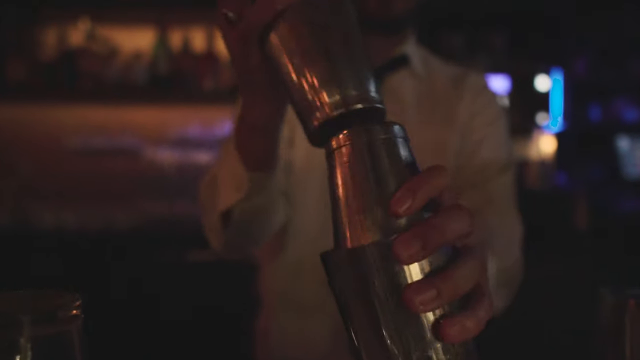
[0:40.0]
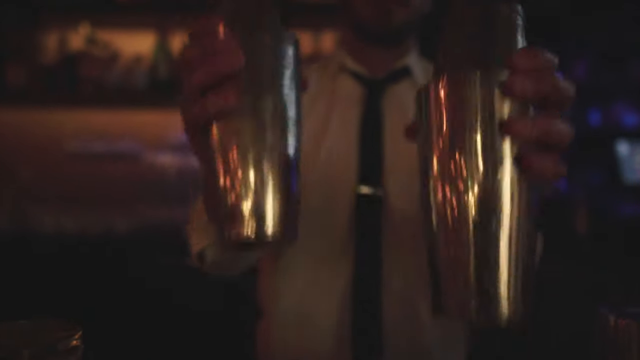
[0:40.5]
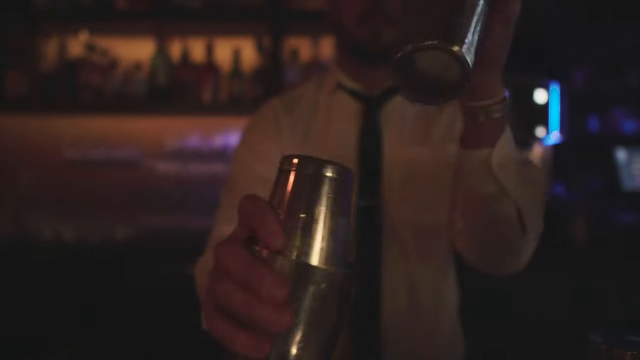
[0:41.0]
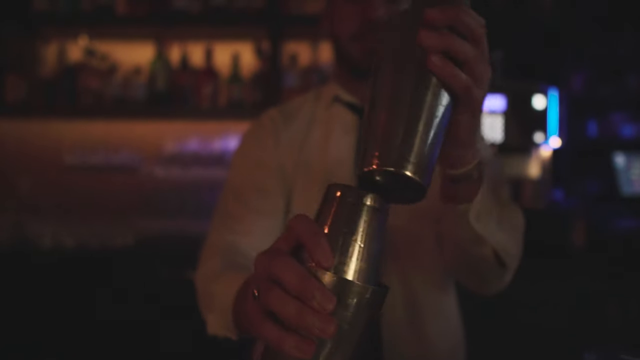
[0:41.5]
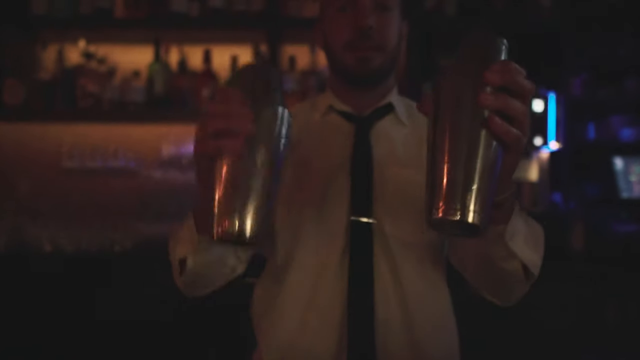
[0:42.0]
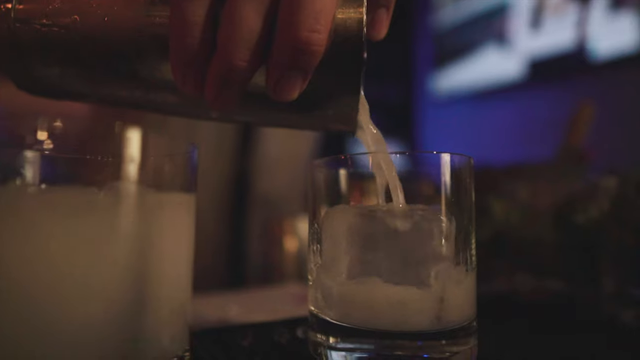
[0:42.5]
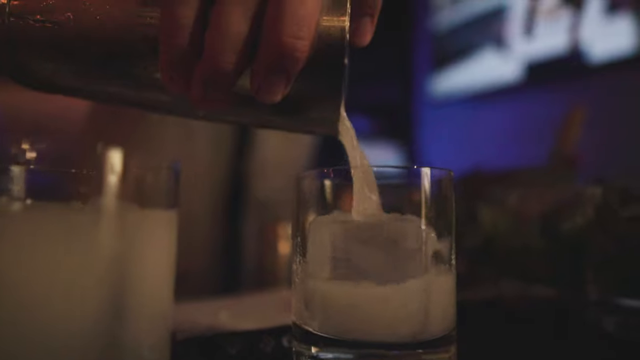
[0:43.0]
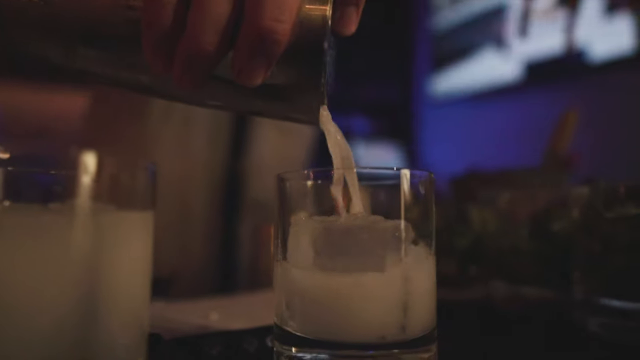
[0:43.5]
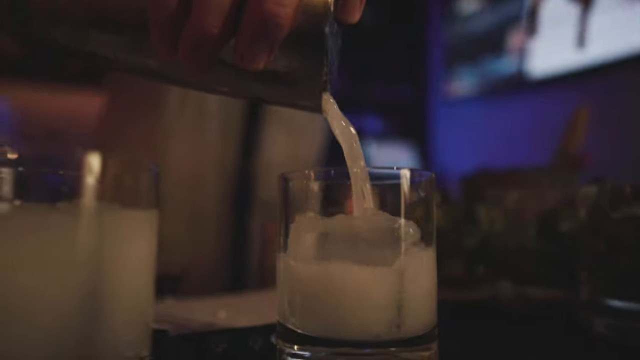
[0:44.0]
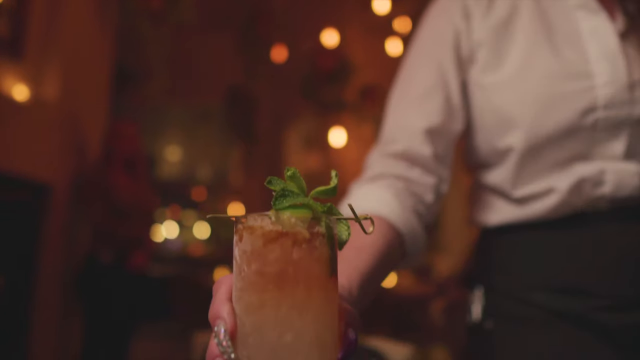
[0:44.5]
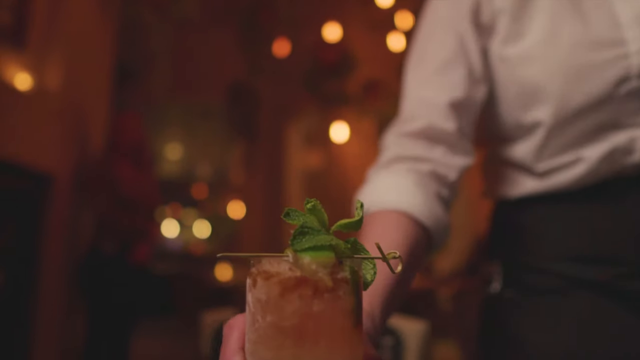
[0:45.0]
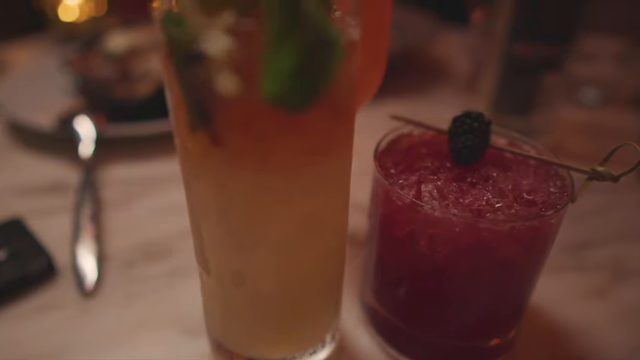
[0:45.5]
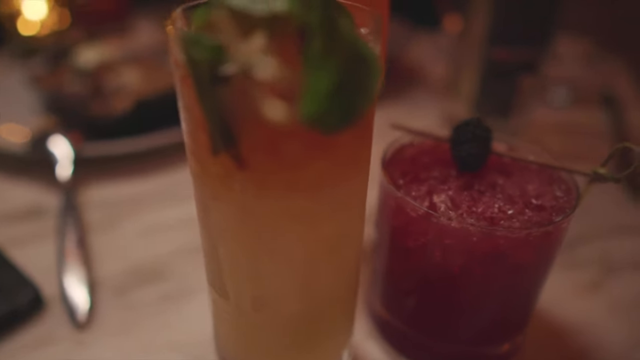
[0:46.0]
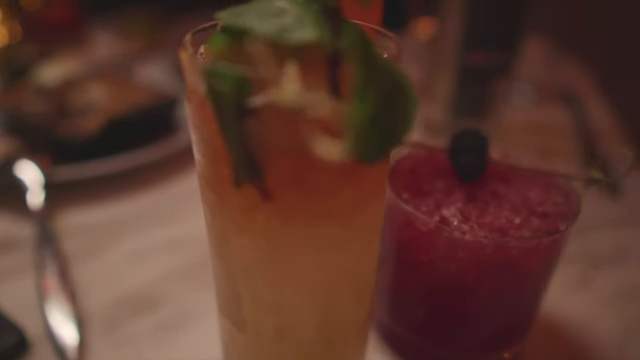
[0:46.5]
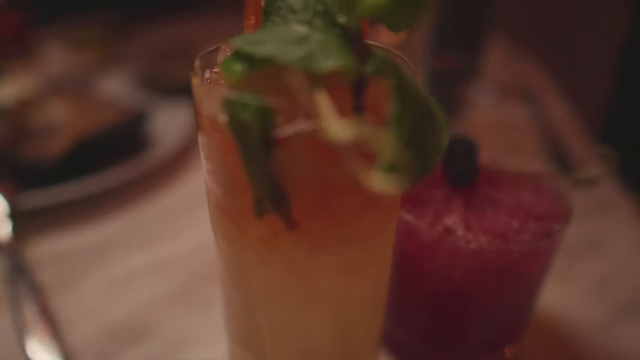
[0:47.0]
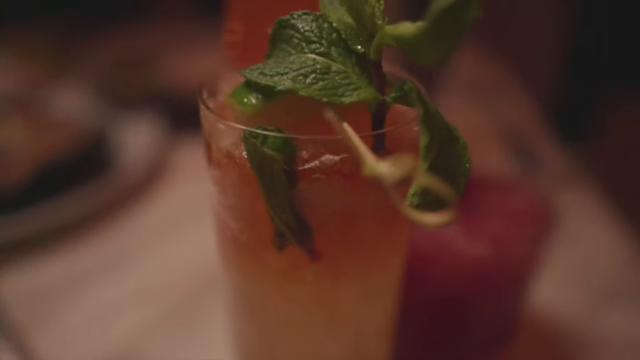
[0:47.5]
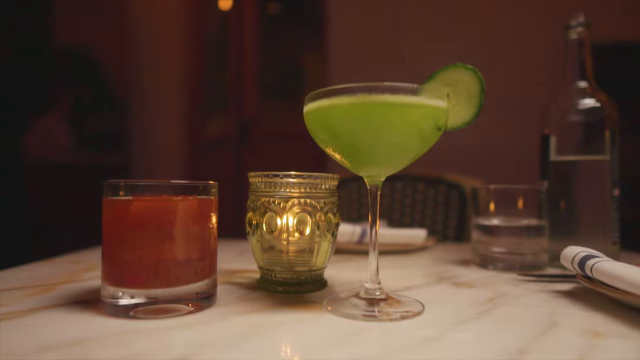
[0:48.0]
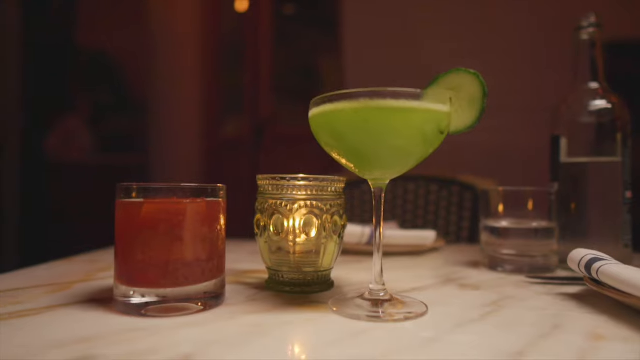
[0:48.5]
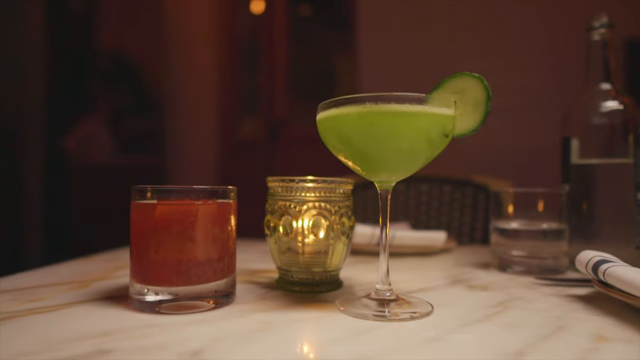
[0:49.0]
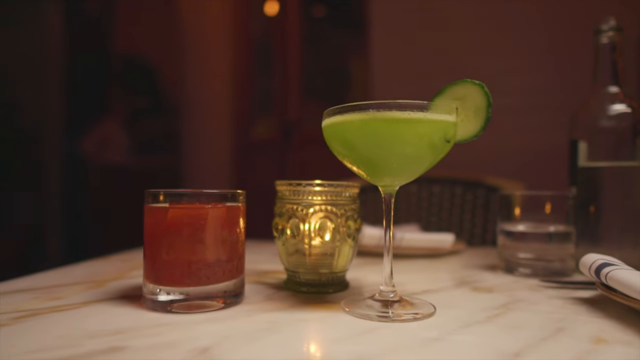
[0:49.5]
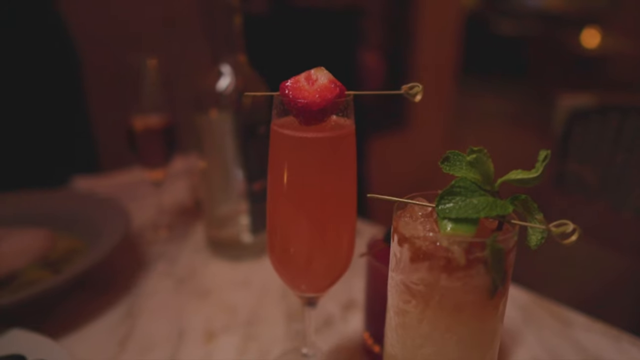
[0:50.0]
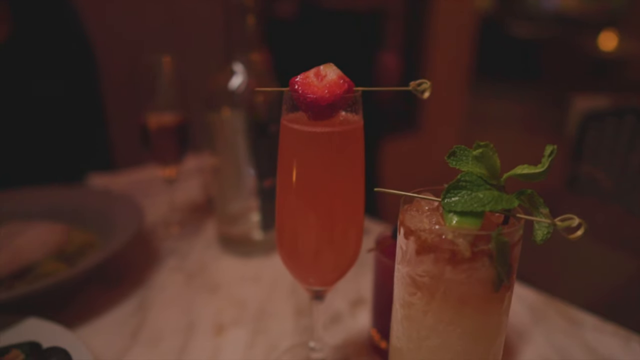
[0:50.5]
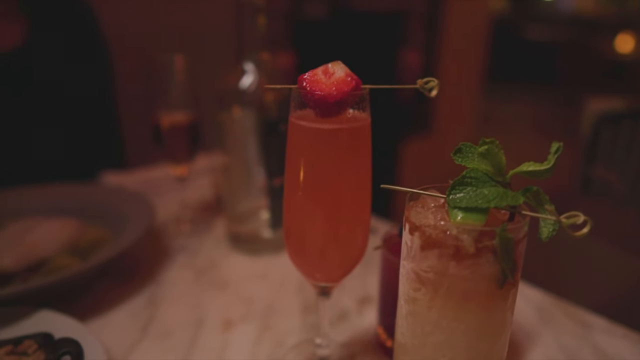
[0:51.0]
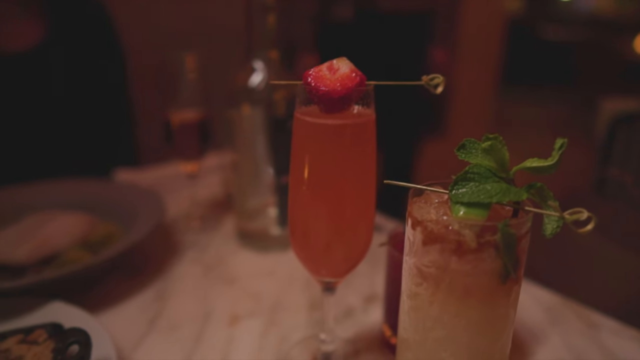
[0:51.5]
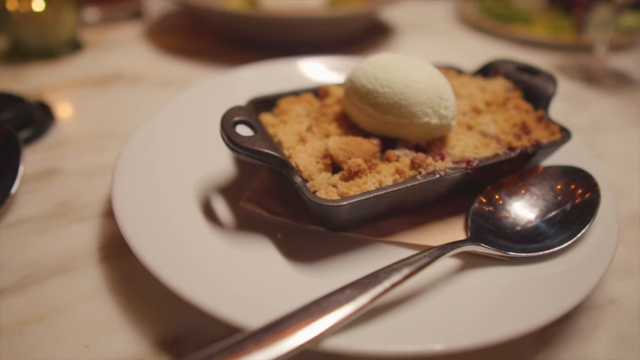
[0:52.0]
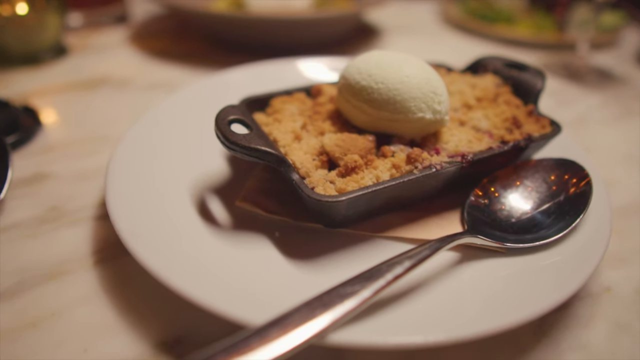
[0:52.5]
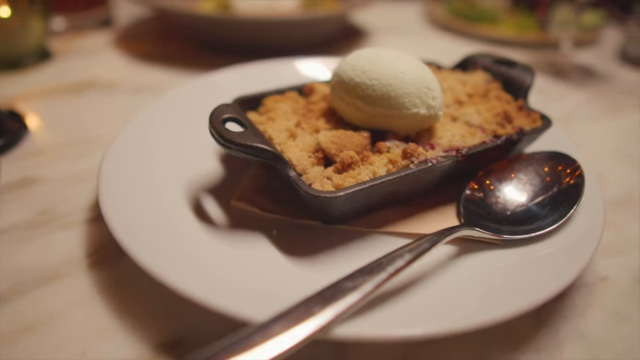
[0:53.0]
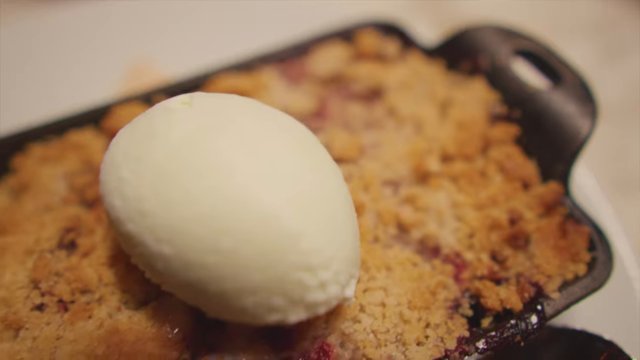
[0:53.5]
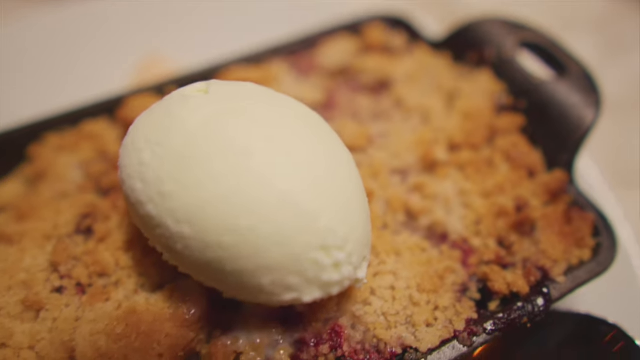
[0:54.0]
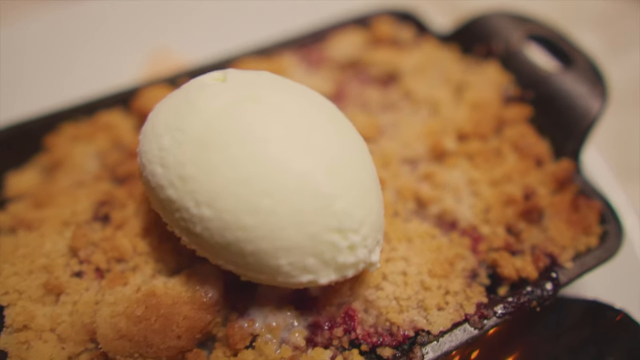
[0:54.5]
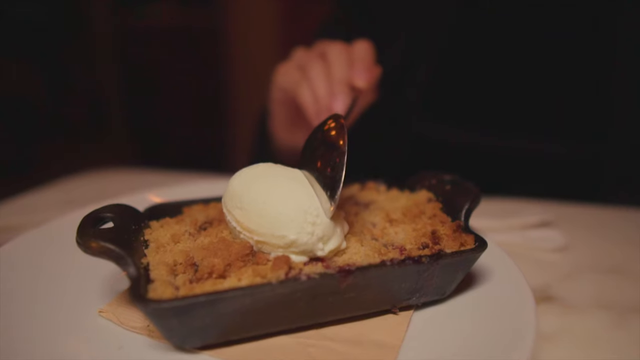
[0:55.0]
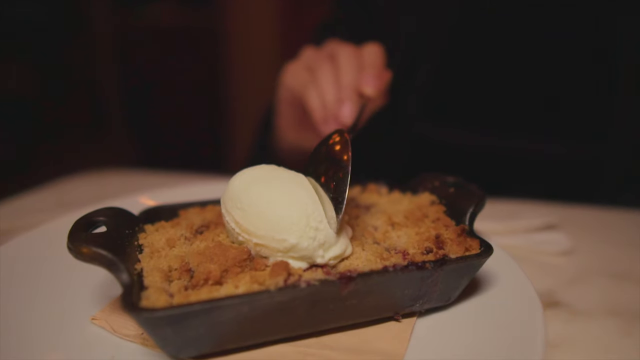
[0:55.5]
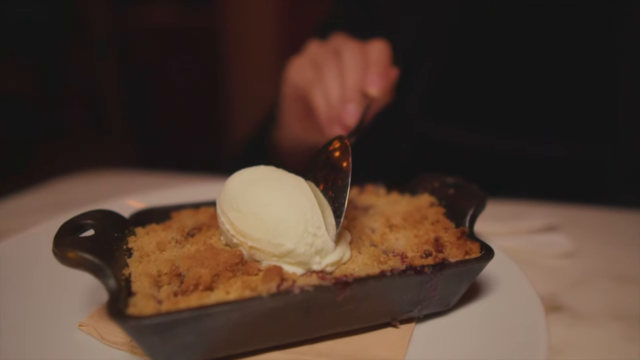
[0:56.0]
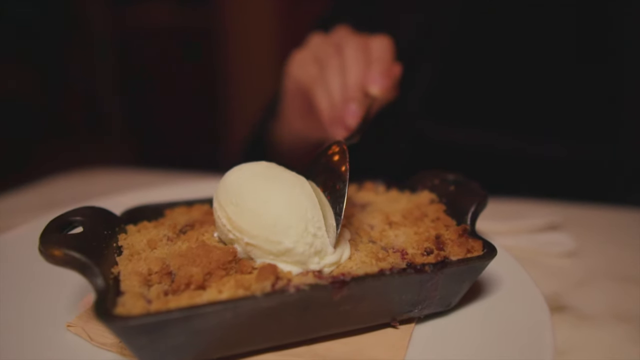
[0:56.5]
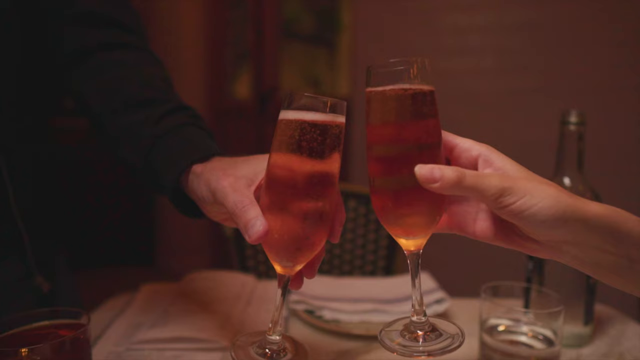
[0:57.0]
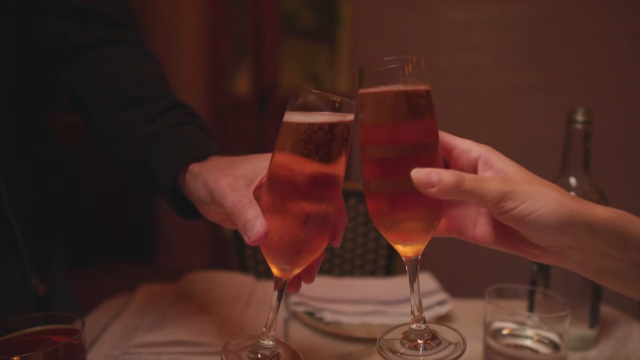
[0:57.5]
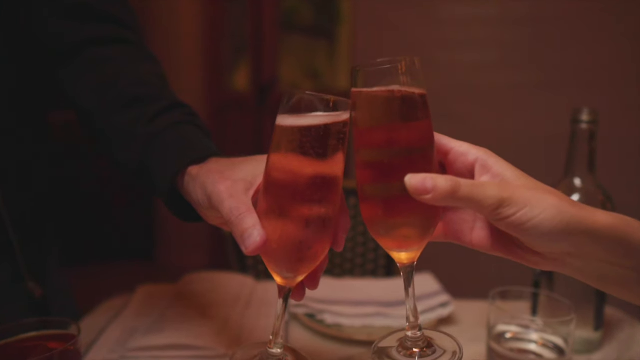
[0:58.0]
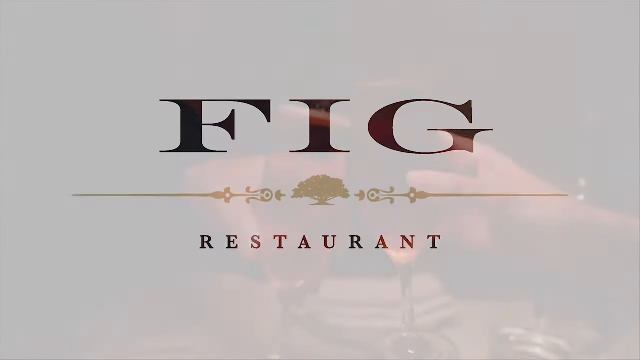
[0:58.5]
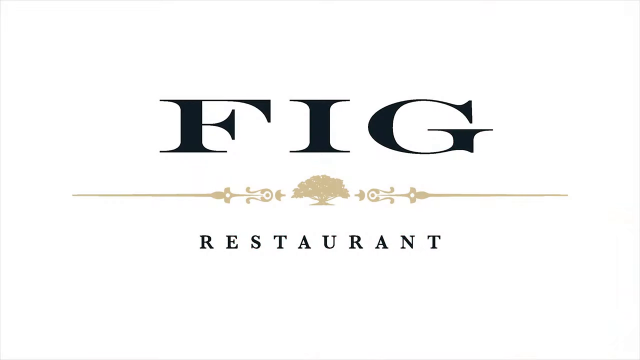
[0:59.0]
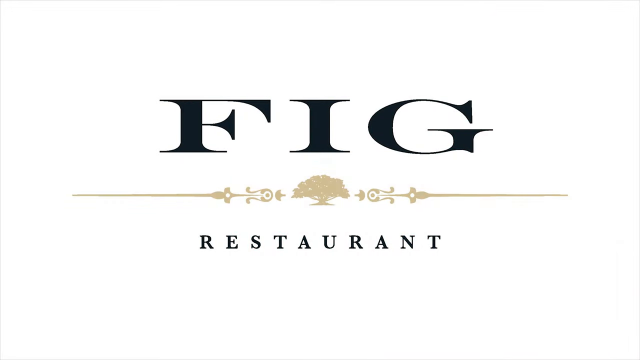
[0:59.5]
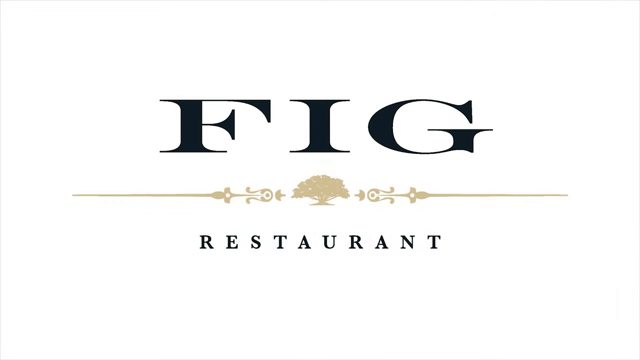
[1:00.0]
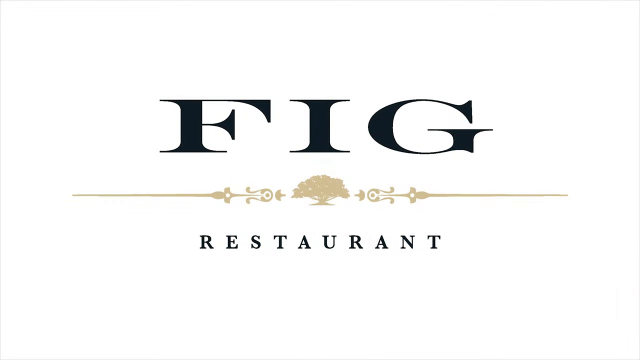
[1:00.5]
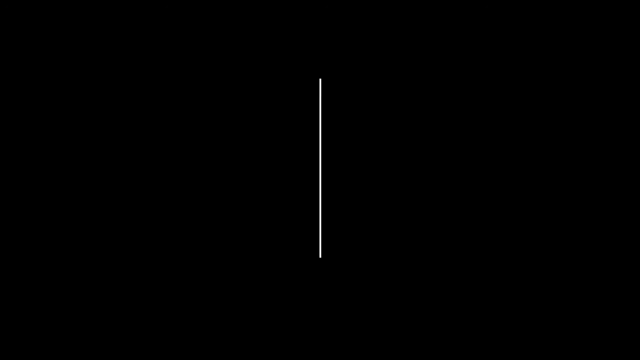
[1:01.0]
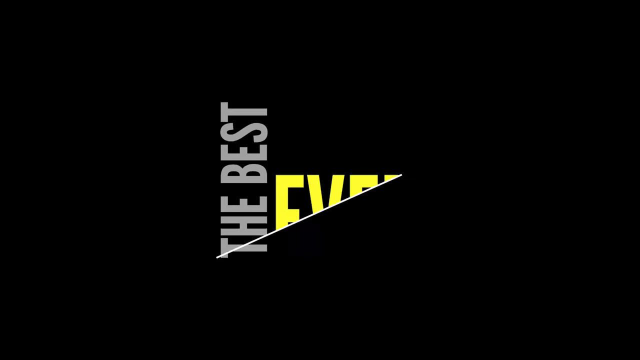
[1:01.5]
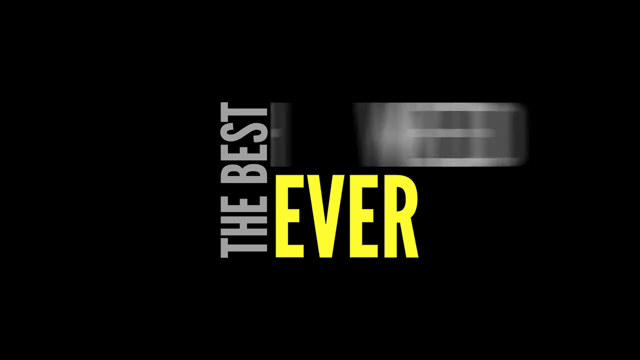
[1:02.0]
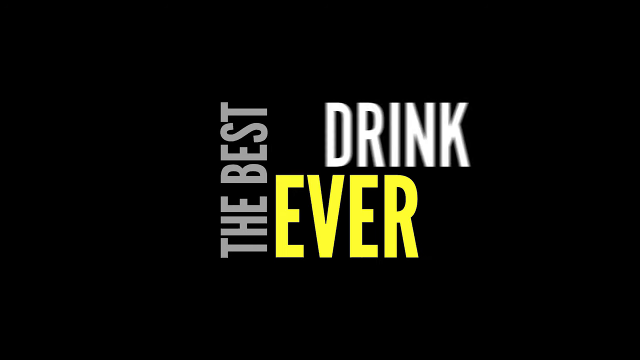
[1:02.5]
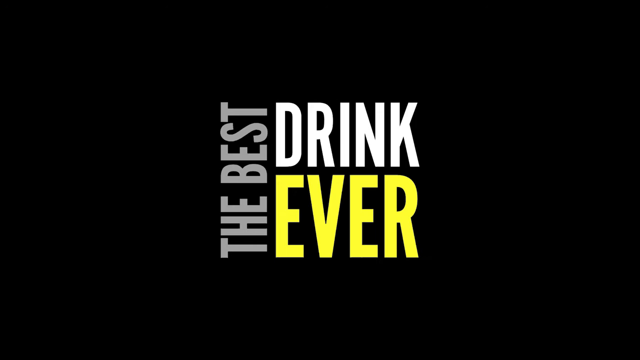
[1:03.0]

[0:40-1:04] A bartender in a white shirt holds mixing containers in both hands and puts one on top of the other. When he moves them, a black tie is visible, and he taps them together. One of the containers is then used to fill a drink. A waiter or waitress in a white shirt serves a drink with a green garnish on top. Another drink that looks like it could be a margarita appears, then another; each glass on the table is different. A champagne glass with a strawberry on top appears, along with another glass topped with what could be mint. A dessert that looks like a crumble has a scoop of ice cream on it, and someone holding a spoon in their right hand cuts through the ice cream to reach the center of the dessert. Two people toast with champagne glasses, and at the very end a title screen says "Fig Restaurant," followed by "the best drink ever."